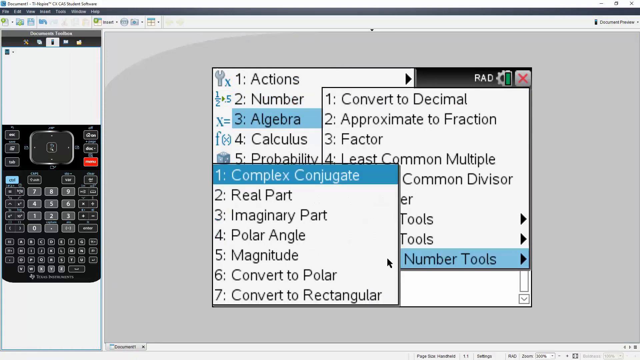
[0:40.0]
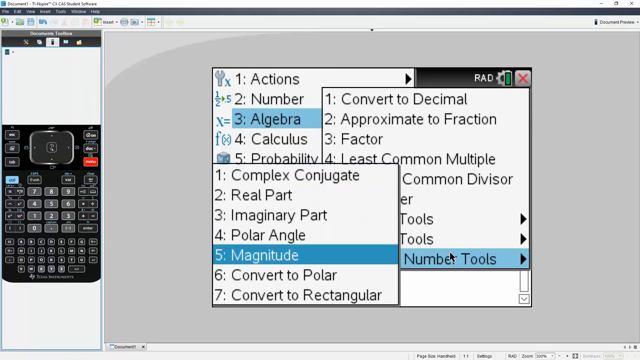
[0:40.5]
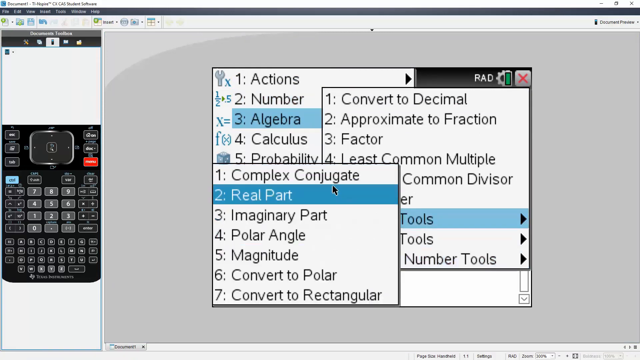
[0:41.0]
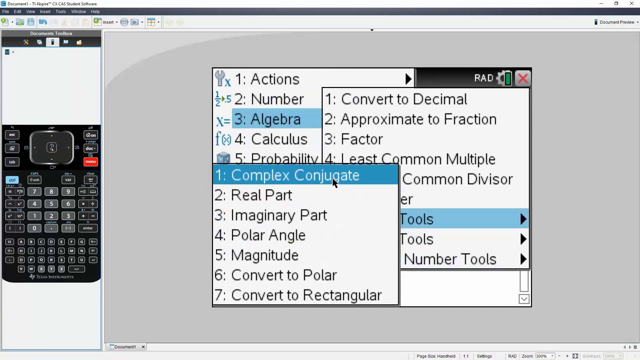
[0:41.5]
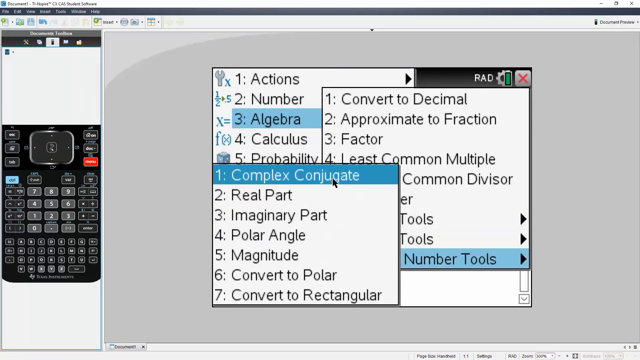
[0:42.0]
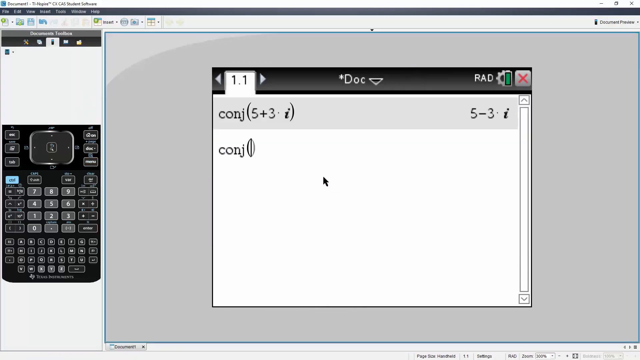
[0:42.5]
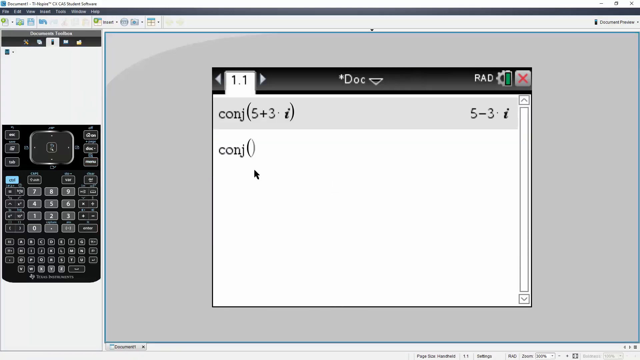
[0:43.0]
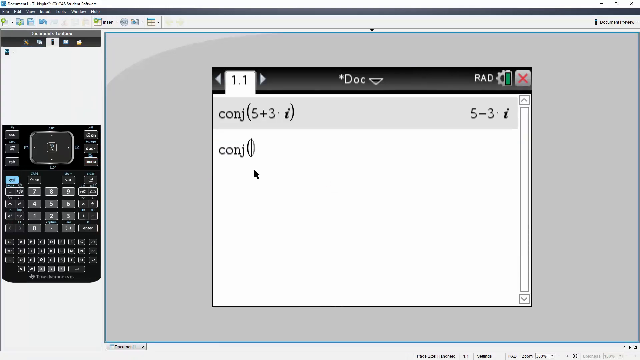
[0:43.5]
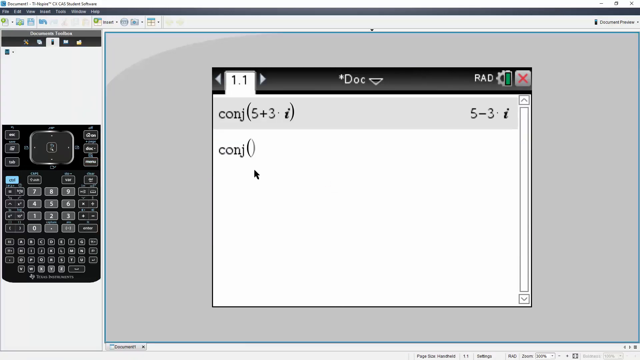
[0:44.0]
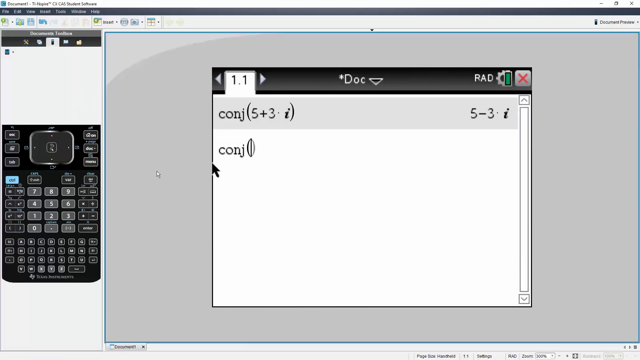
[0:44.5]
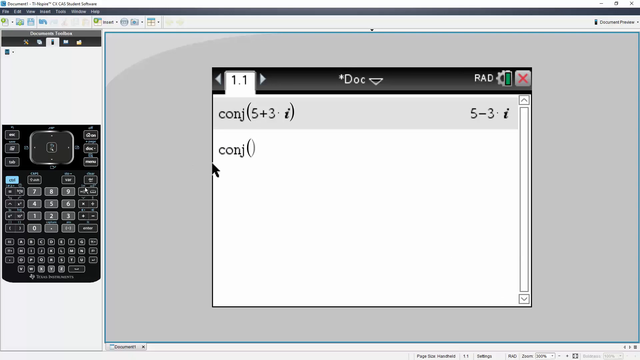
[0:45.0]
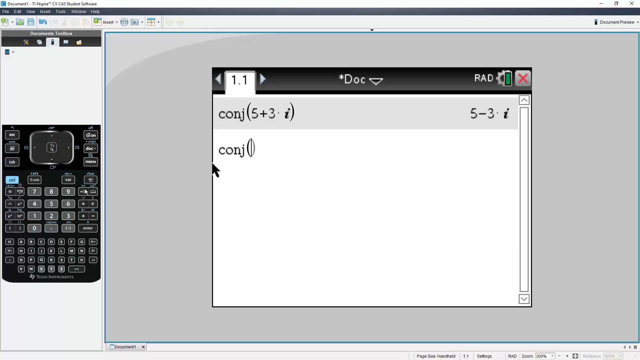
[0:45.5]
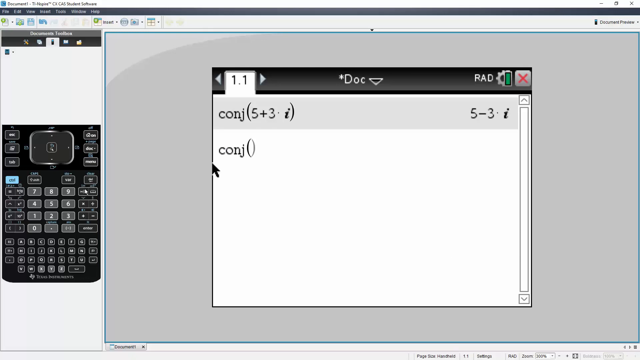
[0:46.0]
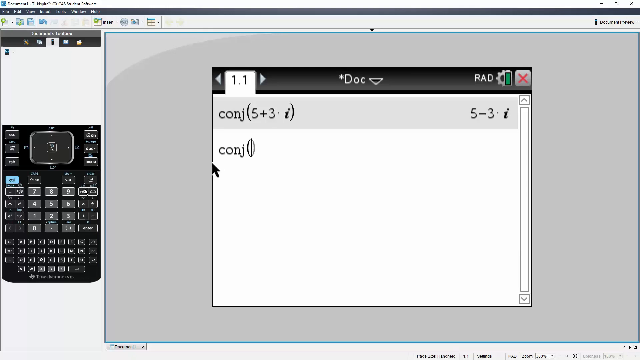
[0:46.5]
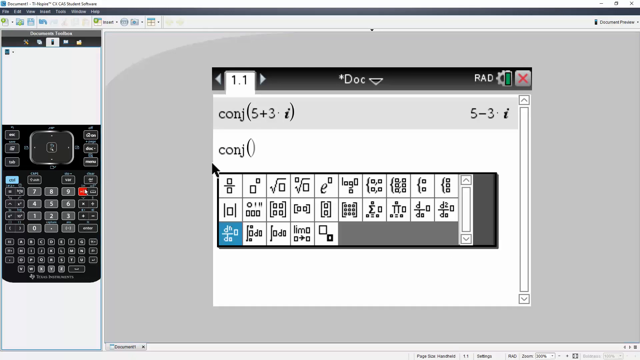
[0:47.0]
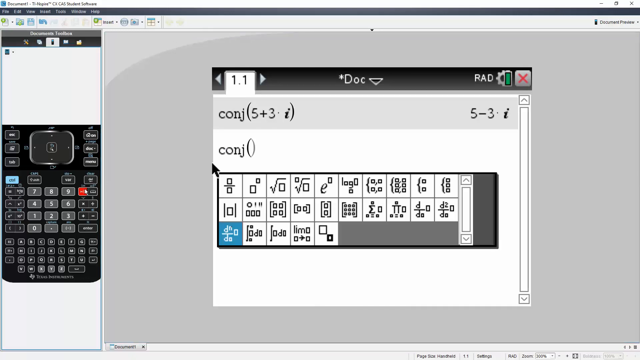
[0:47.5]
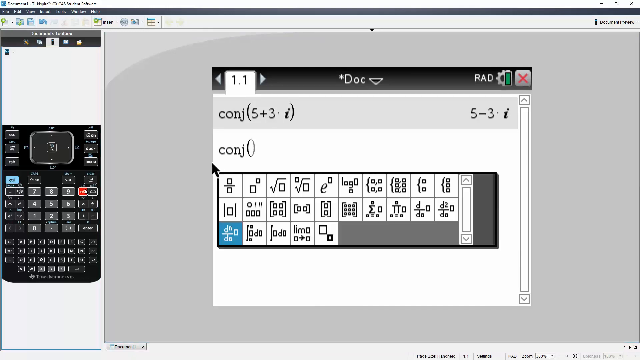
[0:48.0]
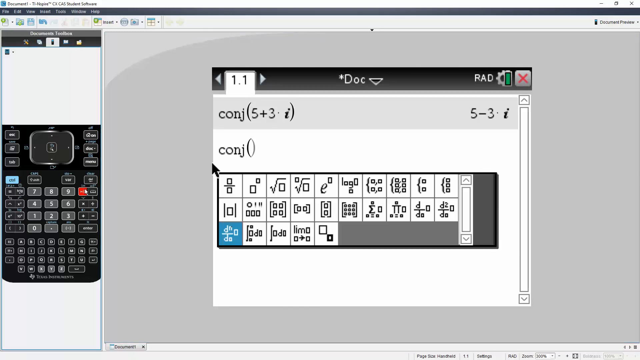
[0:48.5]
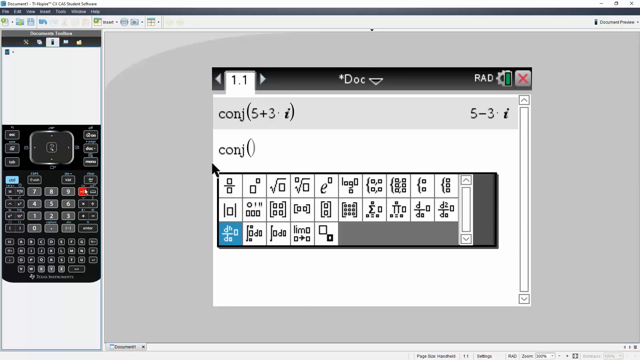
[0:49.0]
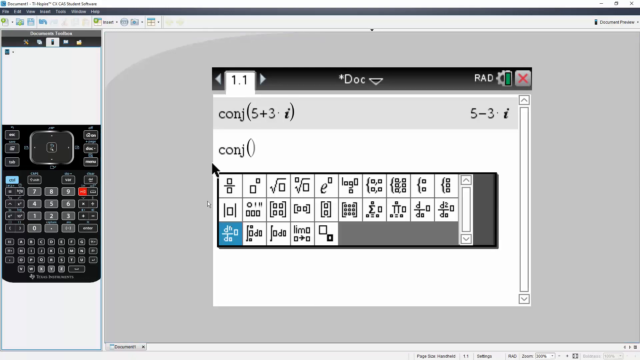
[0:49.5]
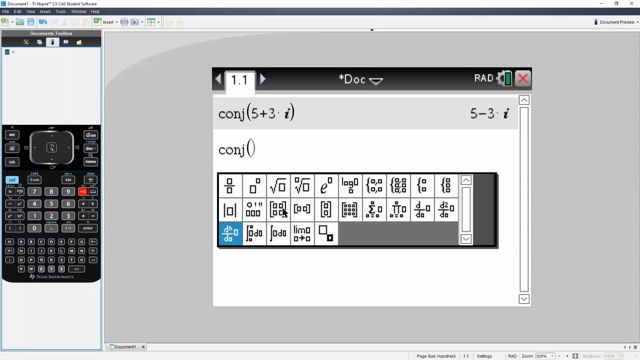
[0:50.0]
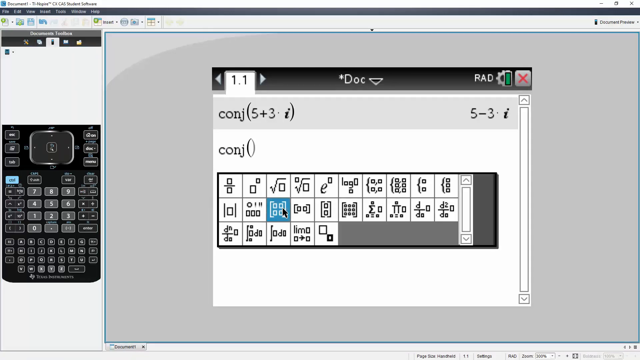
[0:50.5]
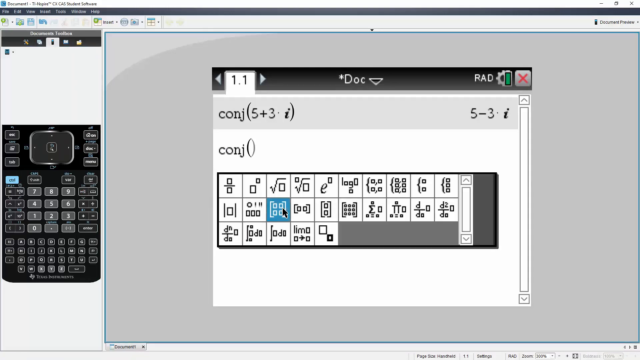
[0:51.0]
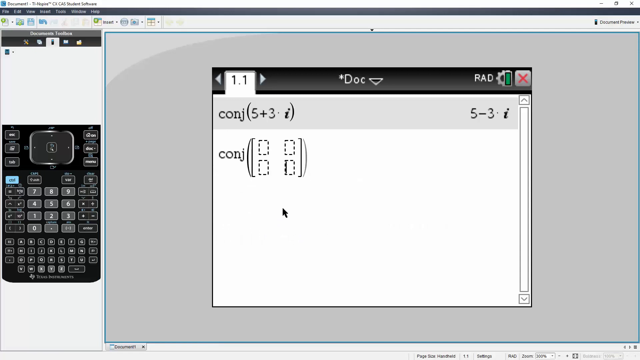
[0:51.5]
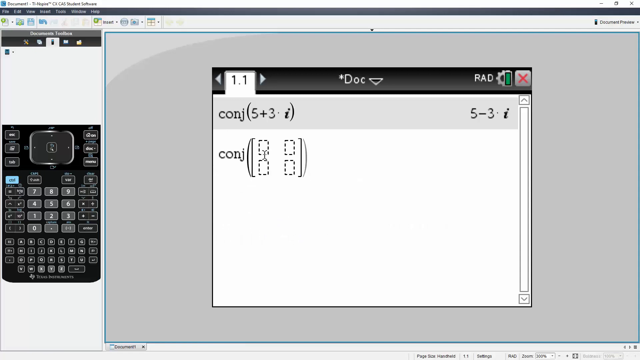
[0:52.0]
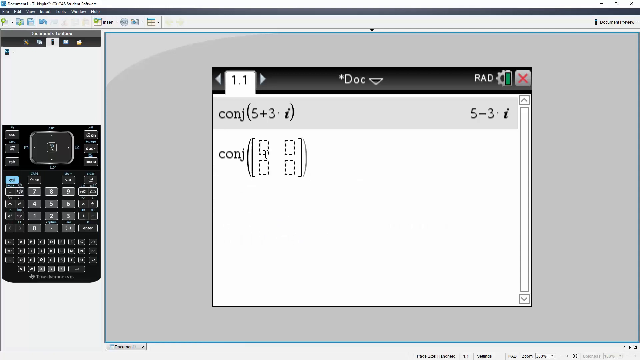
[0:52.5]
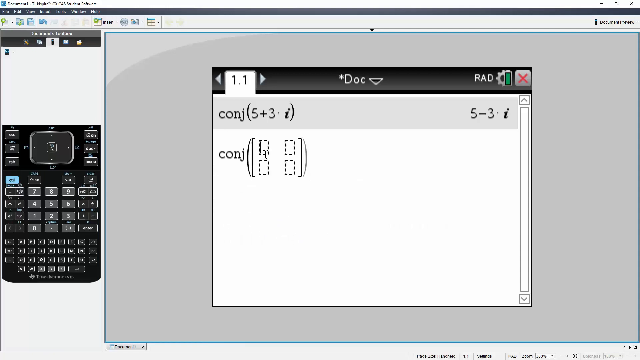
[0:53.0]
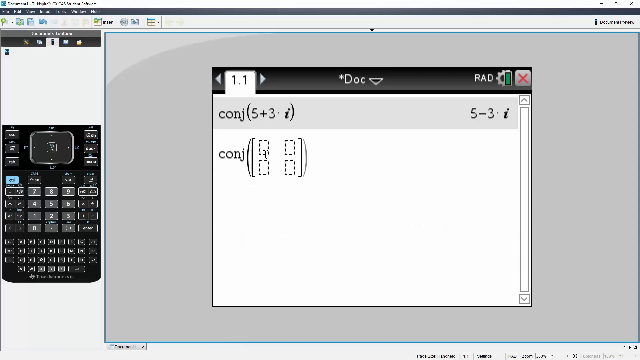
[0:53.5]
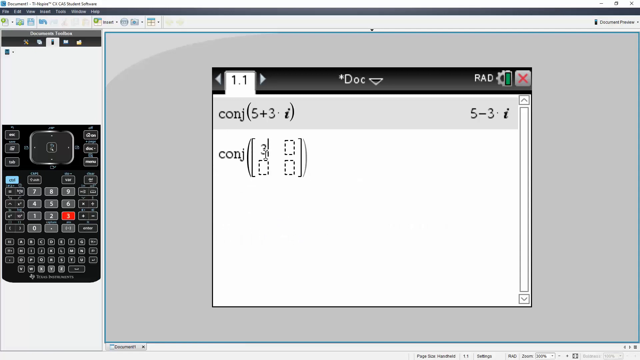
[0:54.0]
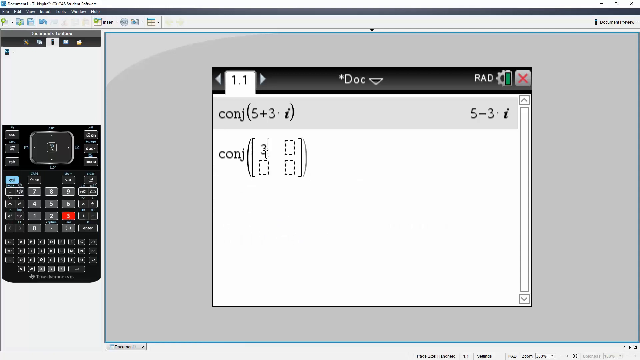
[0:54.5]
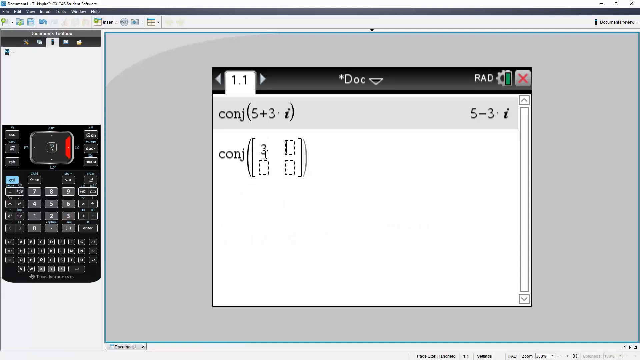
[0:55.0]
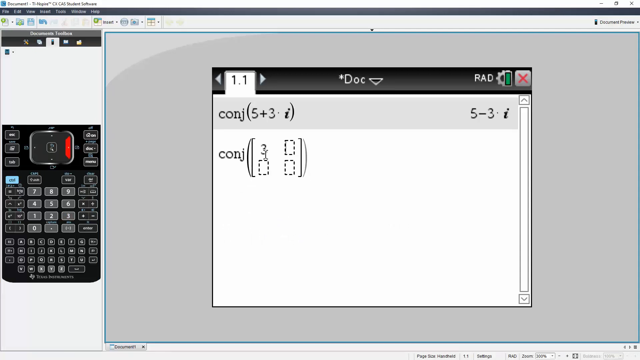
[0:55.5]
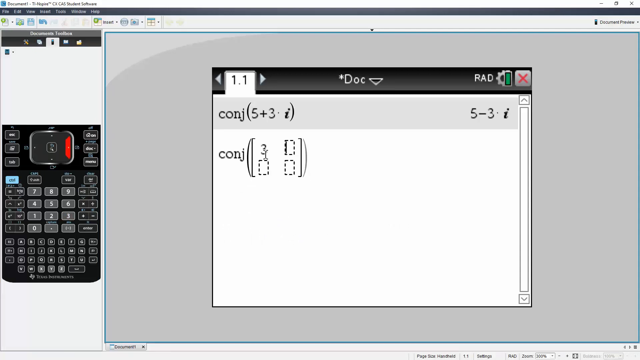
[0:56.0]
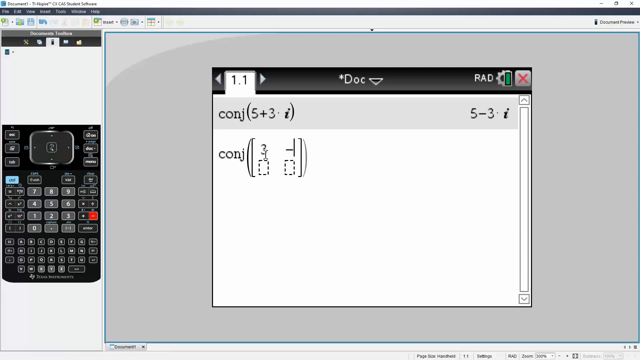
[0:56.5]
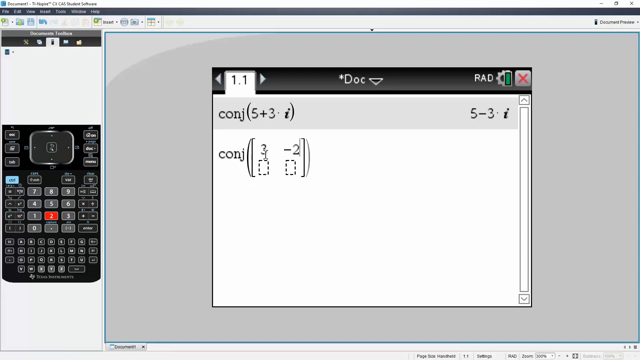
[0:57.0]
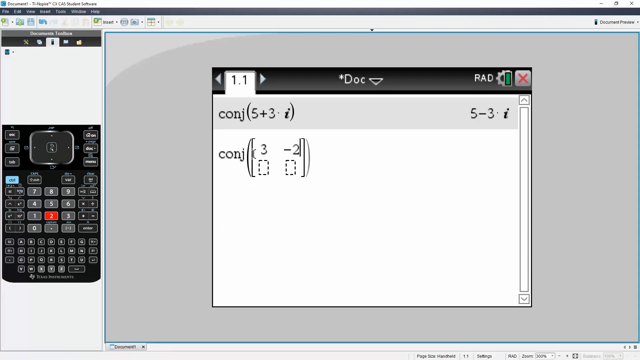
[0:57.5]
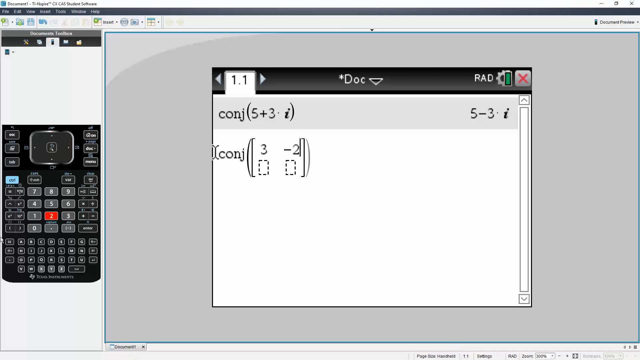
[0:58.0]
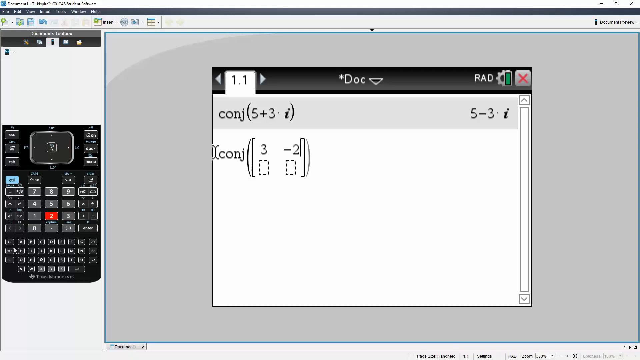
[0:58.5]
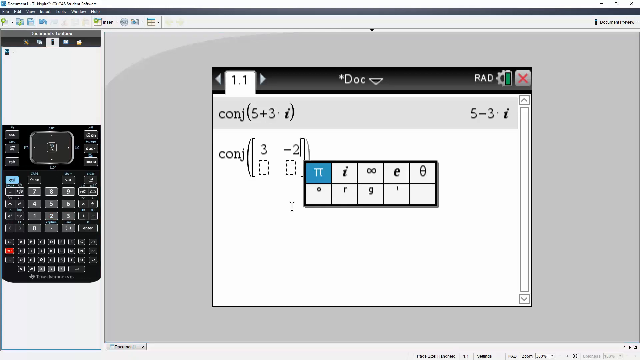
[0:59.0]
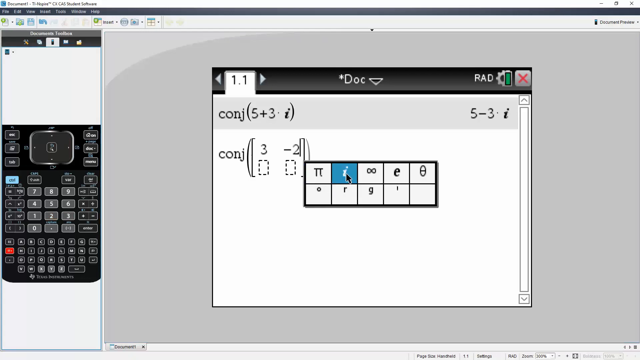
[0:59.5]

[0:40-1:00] A person works on a math problem in a software program, with the calculator face on the left showing all of the number and menu options. A button clicked on the calculator opens several flyout menus, and another complex conjugate is selected, which puts that part of the math problem into the notepad. It fills in next to "C.O.N.J." in the center of the notepad. The number 3 is entered in one box, followed by minus 2, and the other boxes below the 3 minus 2 next to "C.O.N.J." still need to be filled in. As the mouse pointer moves over the calculator buttons on the left, the ones that are clicked turn red. The pointer then comes back to the right part of the screen and selects the menu options for the button clicked on the calculator.